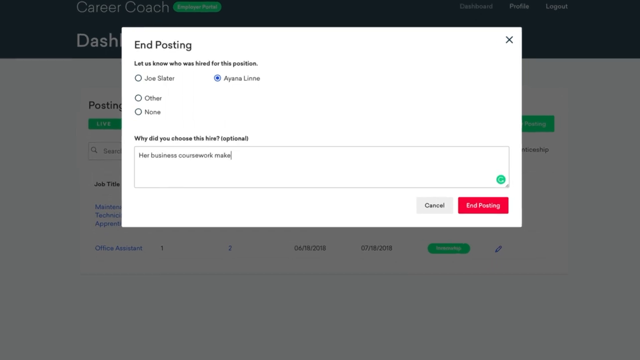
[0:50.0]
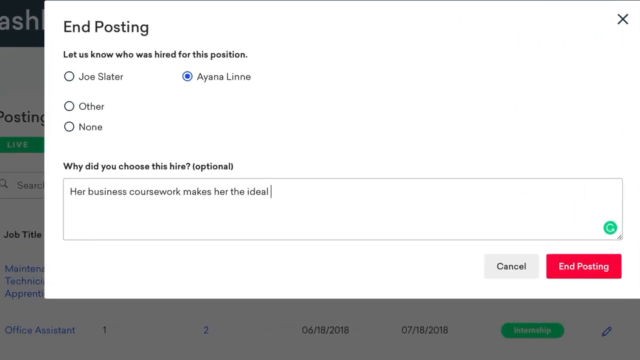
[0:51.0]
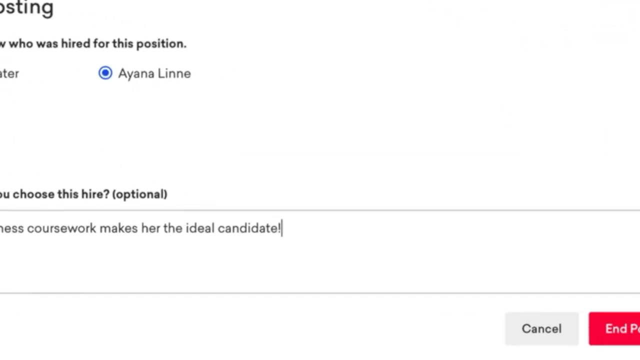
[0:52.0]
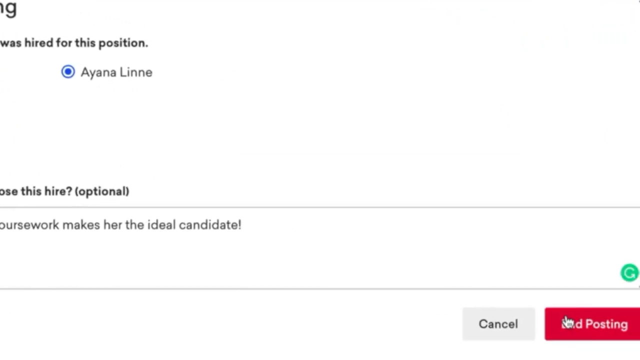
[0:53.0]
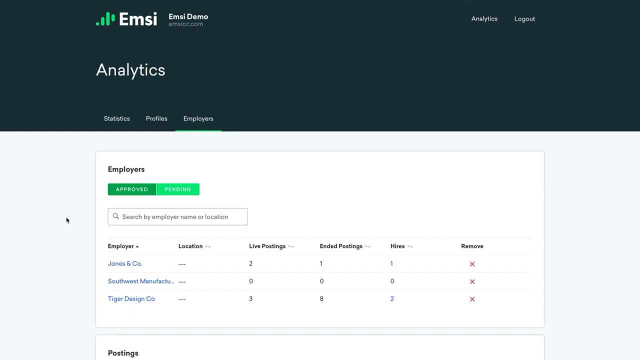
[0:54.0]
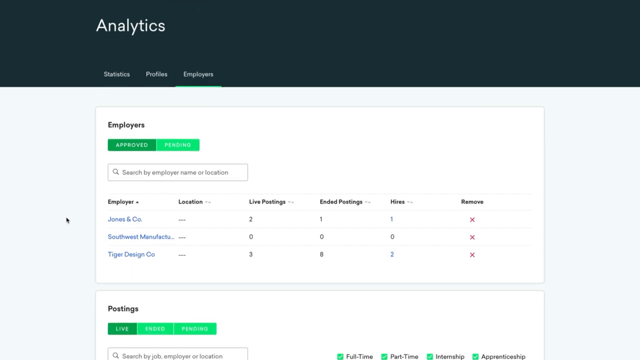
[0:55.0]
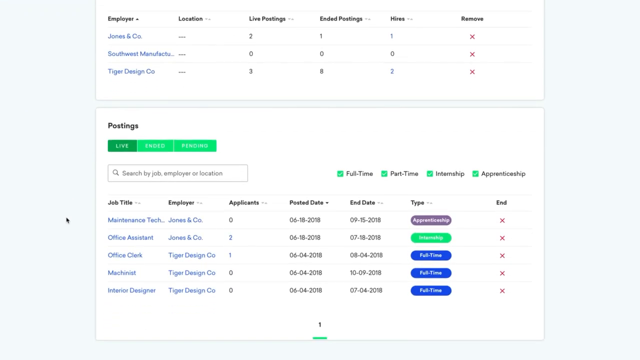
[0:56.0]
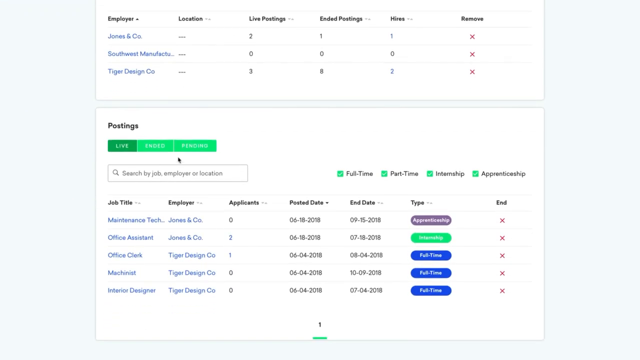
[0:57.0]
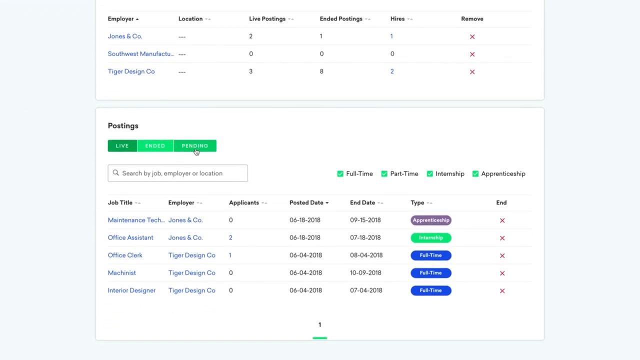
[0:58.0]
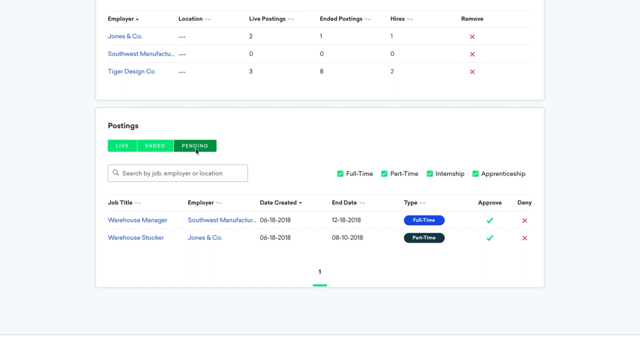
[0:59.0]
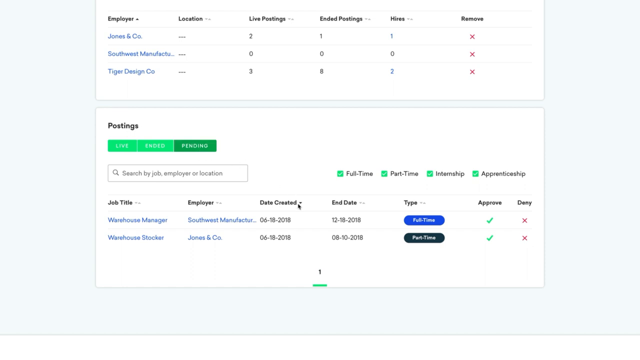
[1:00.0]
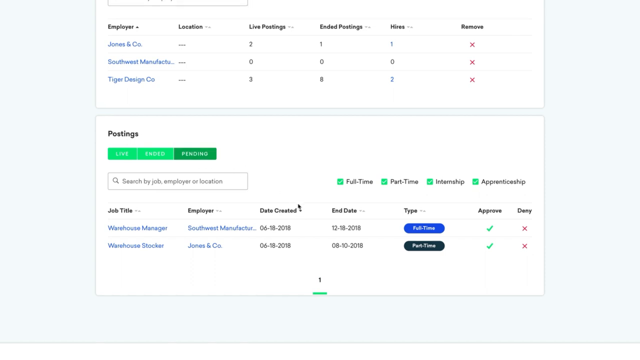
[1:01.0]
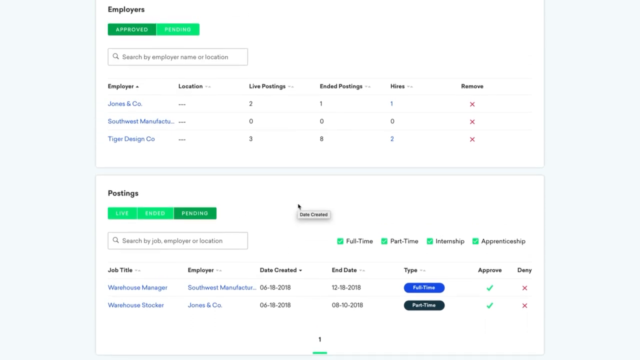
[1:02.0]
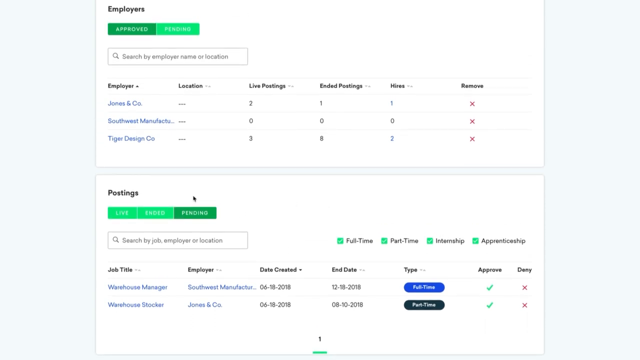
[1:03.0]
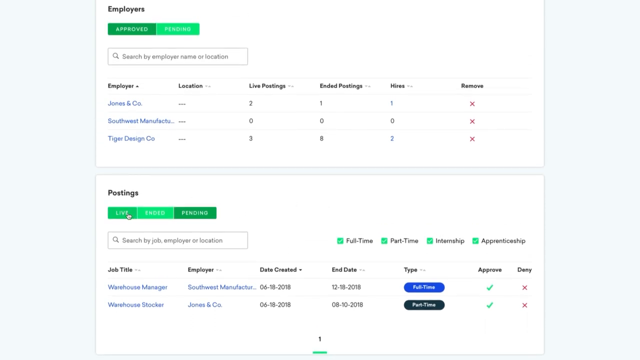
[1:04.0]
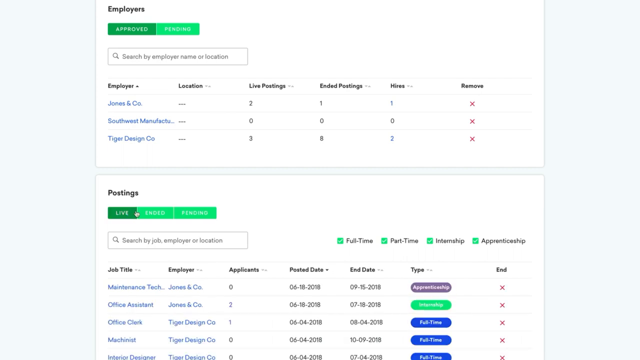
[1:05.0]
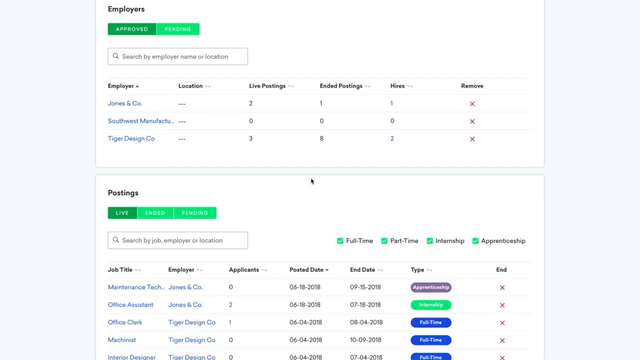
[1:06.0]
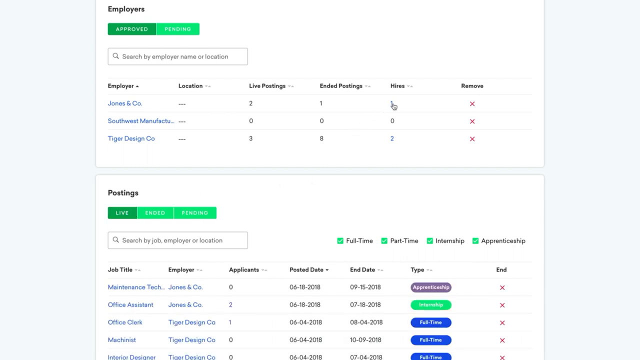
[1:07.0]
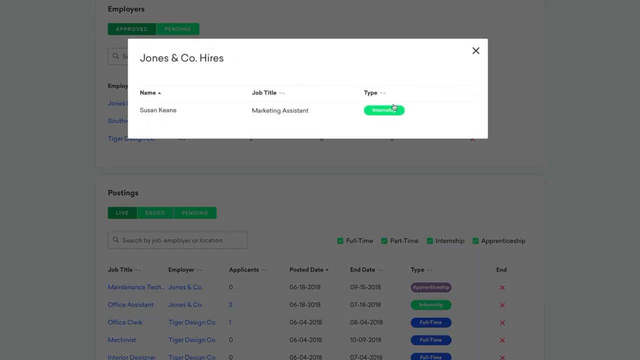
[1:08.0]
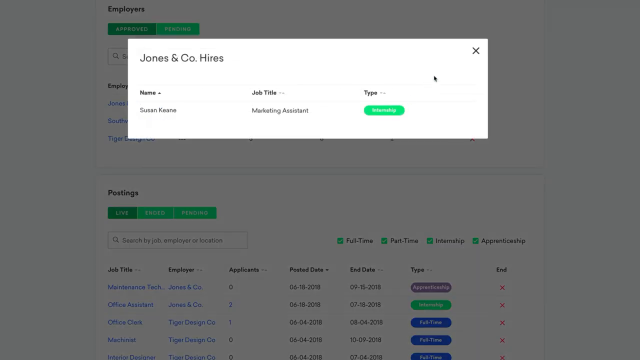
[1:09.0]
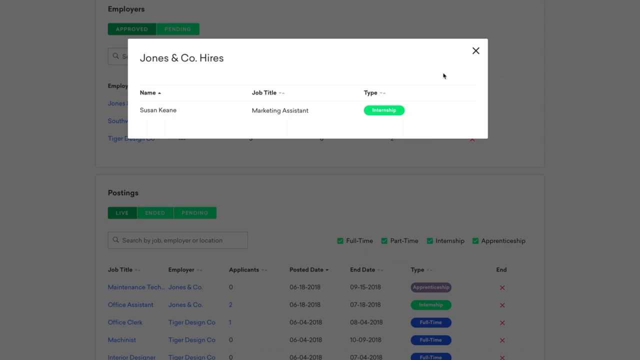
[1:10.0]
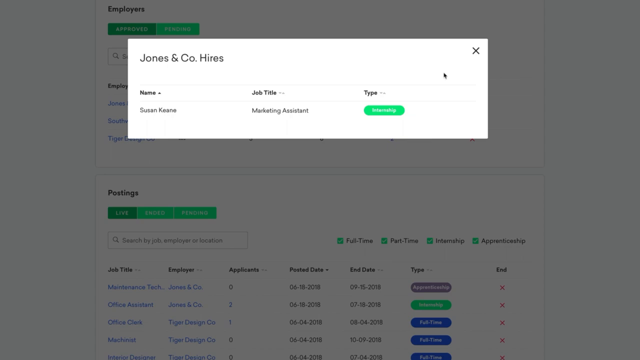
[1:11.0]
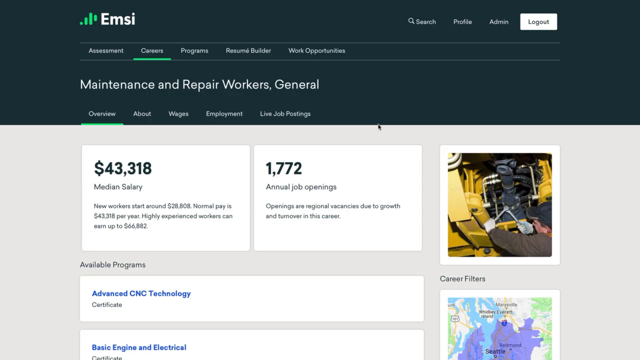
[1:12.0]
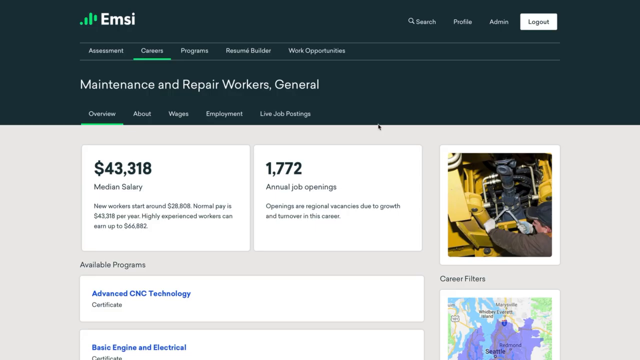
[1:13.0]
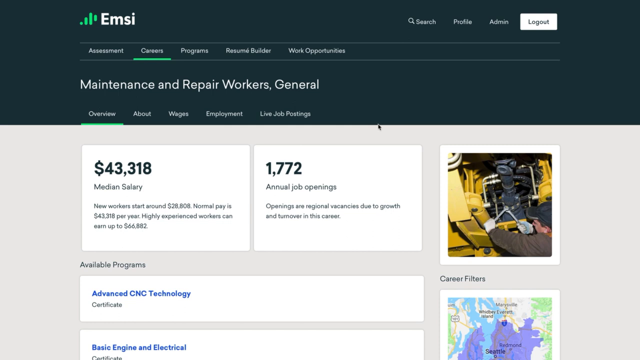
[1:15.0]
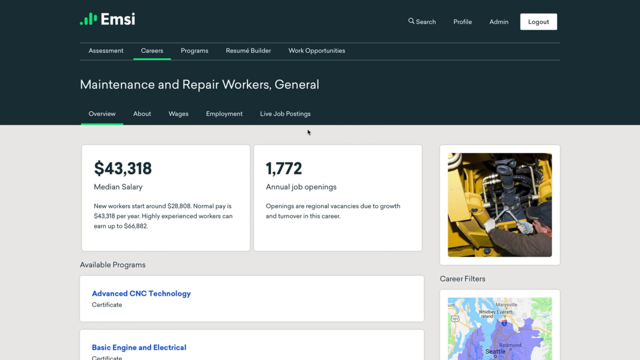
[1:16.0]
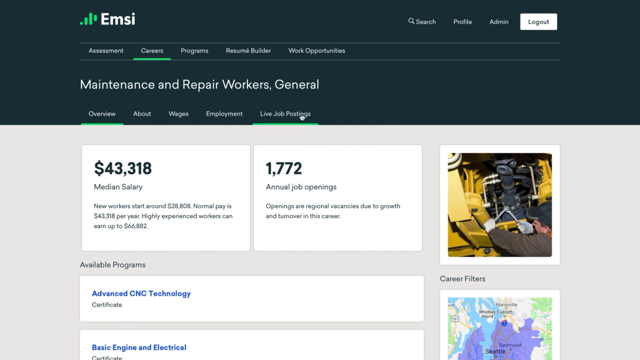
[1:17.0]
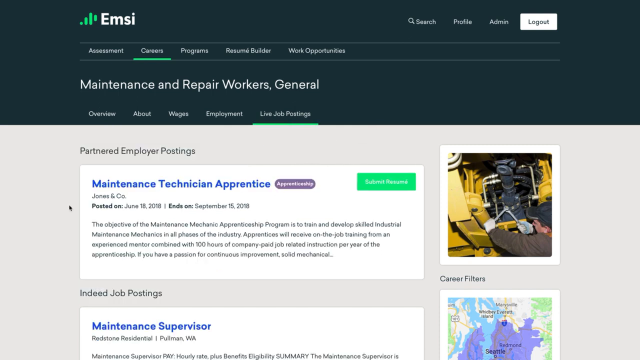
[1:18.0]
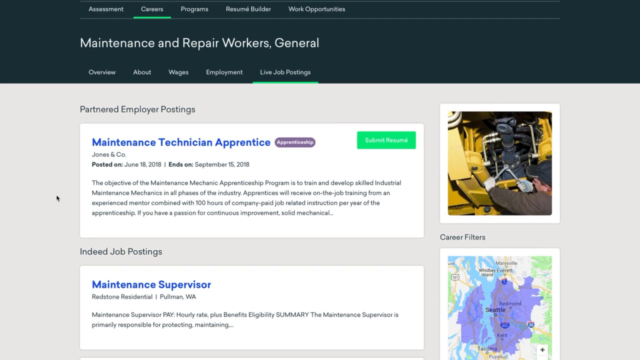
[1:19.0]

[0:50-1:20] On a job postings website, a window titled "End Posting" is open, where the user can select someone for an office assistant position. The choices are Joe Slater, Ayana Lin, Other, or None. The user chooses Ayana Lin, and a field appears asking why they chose this hire. The user enters that her business coursework makes her the ideal candidate, then submits. The video cuts to the MC Analytics page, which shows employers and postings. The user clicks the word "Pending," which shows pending job postings, and scrolls up. They then click "Live," which shows only live postings. They click "Hires" above the Jones & Company employer, which shows Susan Kean, hired as a marketing assistant with the job type internship. The video then cuts to the Maintenance and Repair Workers General page, showing a median salary of $43,318 and 1,772 annual job openings. The user clicks "Live Job Postings" and scrolls down.